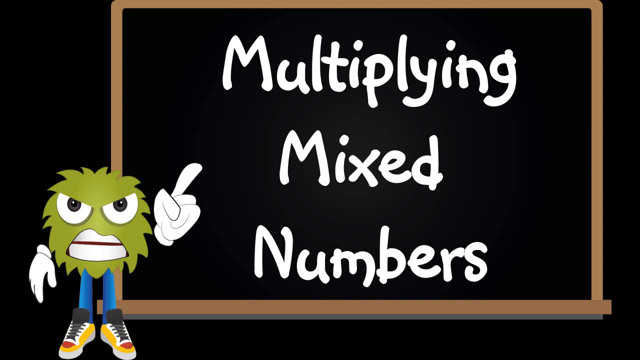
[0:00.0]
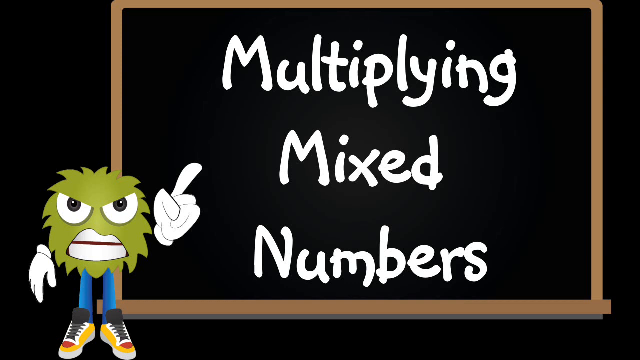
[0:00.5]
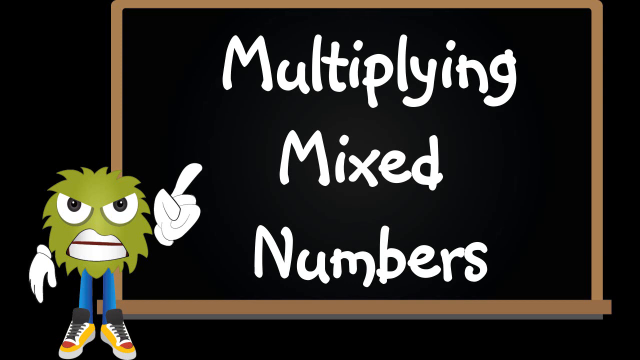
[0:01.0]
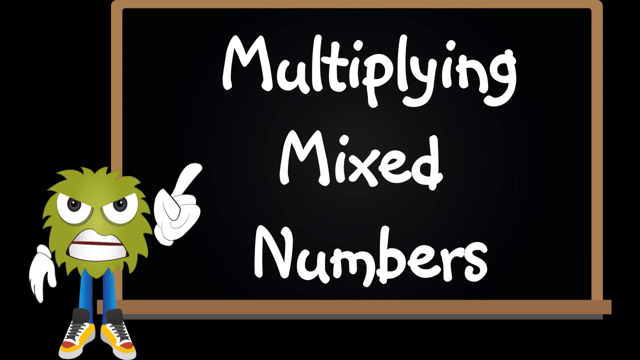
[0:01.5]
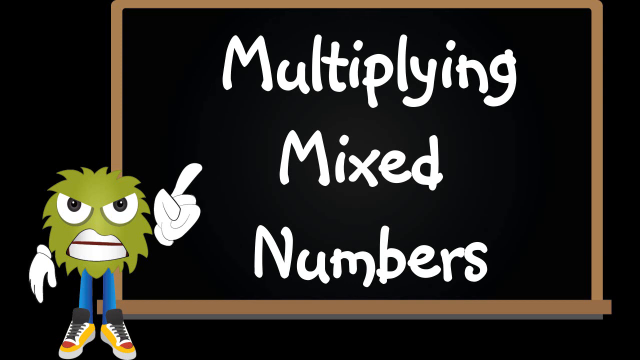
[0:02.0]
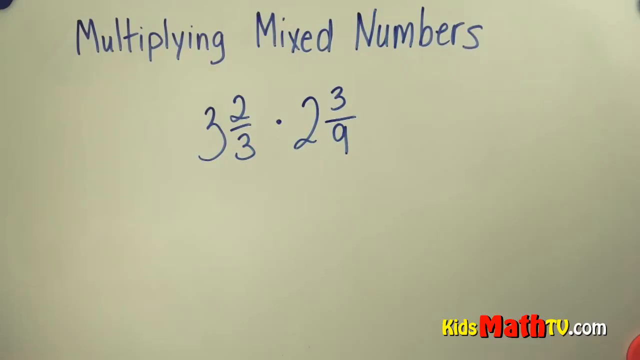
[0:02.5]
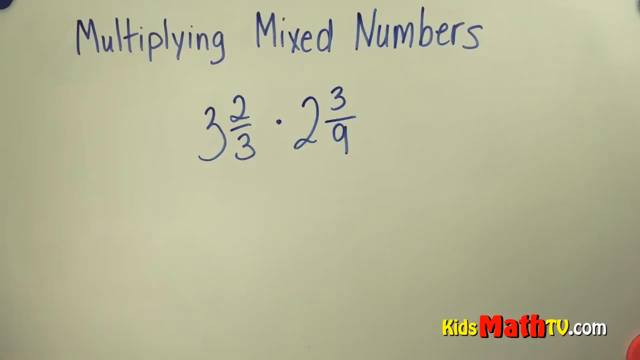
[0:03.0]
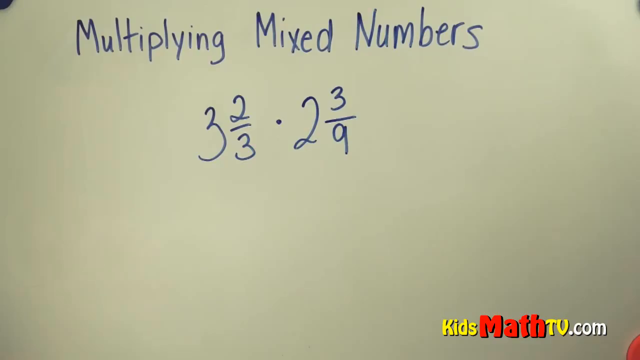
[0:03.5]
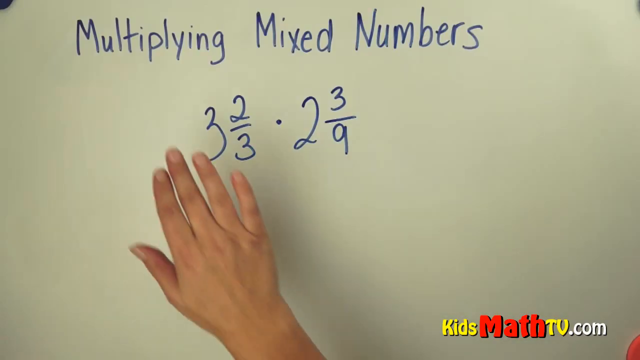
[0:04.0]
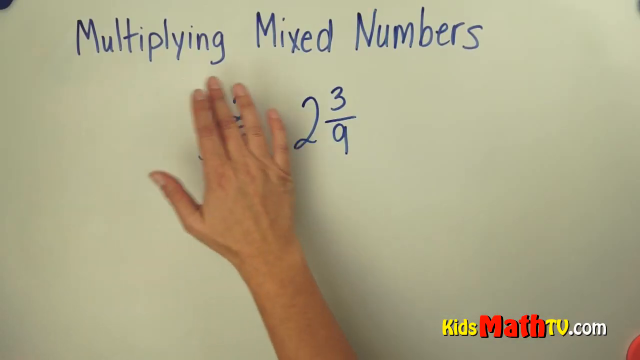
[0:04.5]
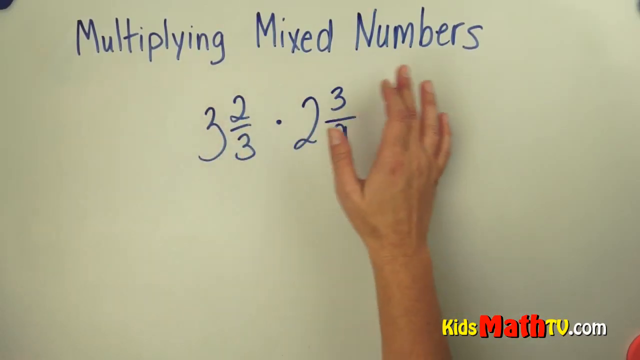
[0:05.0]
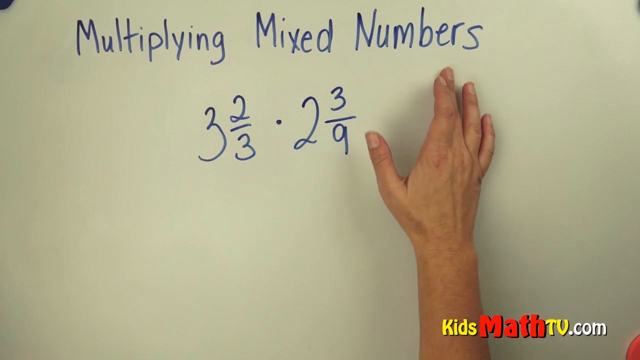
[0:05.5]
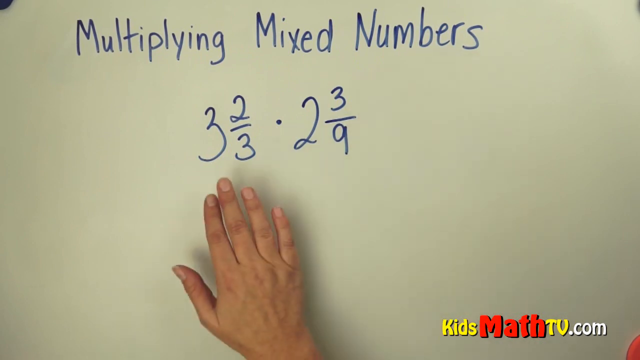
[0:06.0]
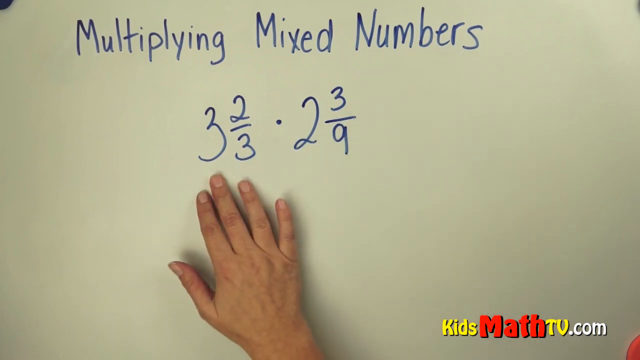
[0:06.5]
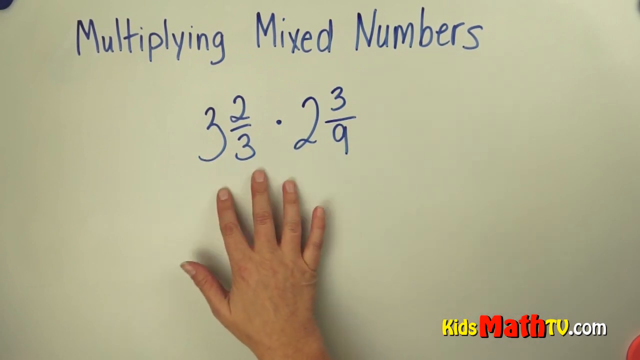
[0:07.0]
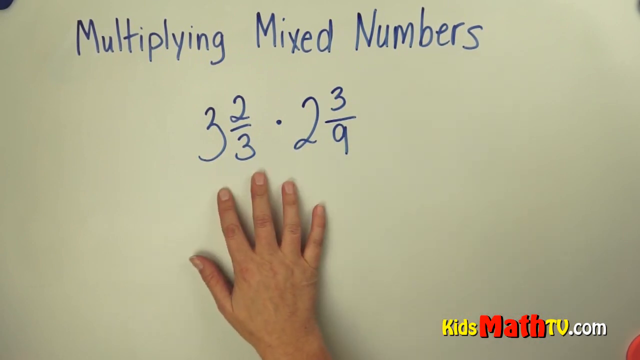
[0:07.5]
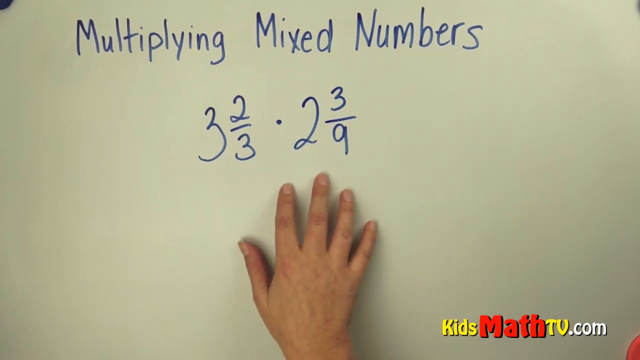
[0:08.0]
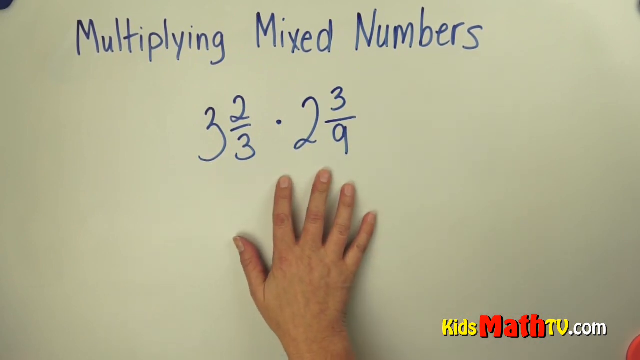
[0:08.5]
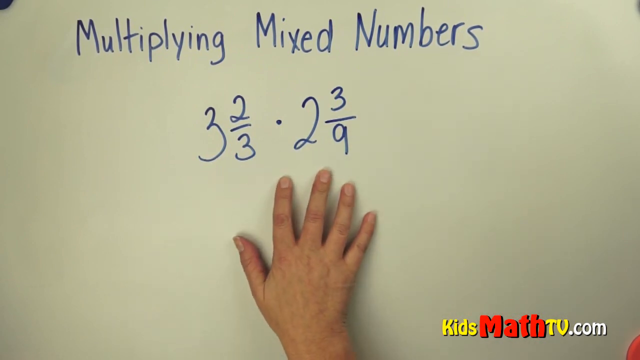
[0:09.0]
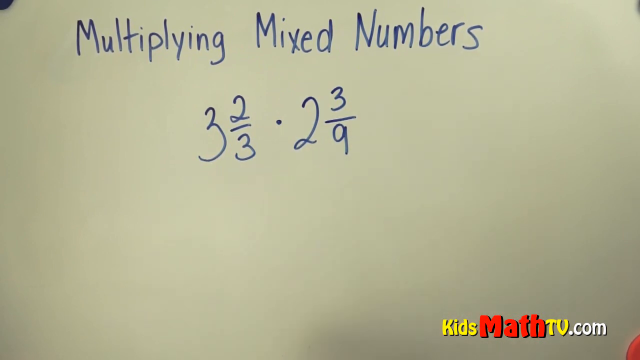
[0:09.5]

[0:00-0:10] The video opens on a black background with white text reading "Multiplying Mixed Numbers" inside a framed board. In the bottom right-hand corner is a monster with a large green head, two large eyes, a large mouth, slim blue legs and two large white hands; with its left hand it points upward with its index finger. The video then shows a whiteboard with the text "Multiplying Mixed Numbers" and two numbers, 3 2/3 and 2 3/9.